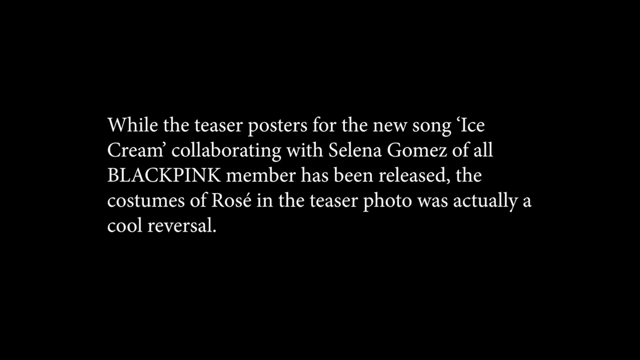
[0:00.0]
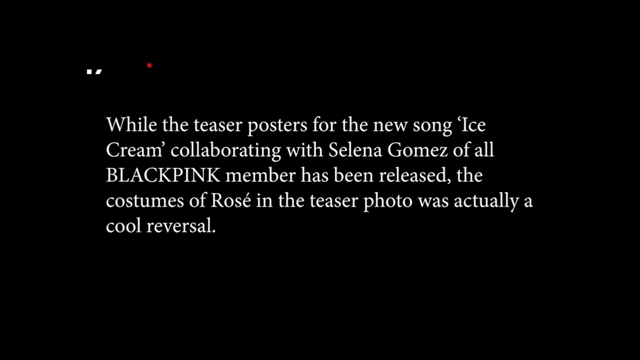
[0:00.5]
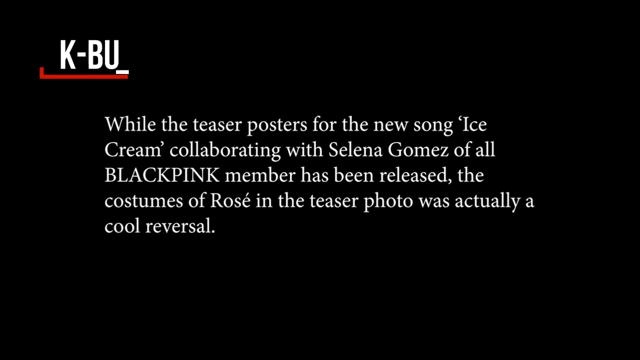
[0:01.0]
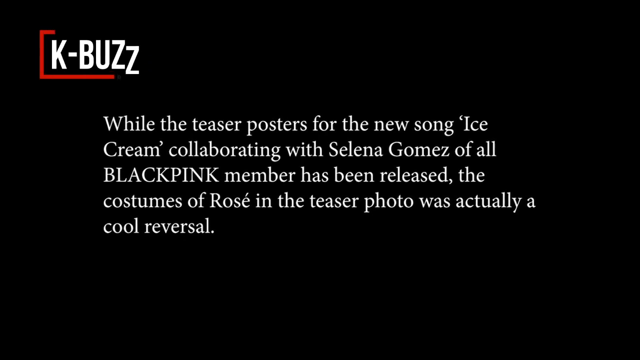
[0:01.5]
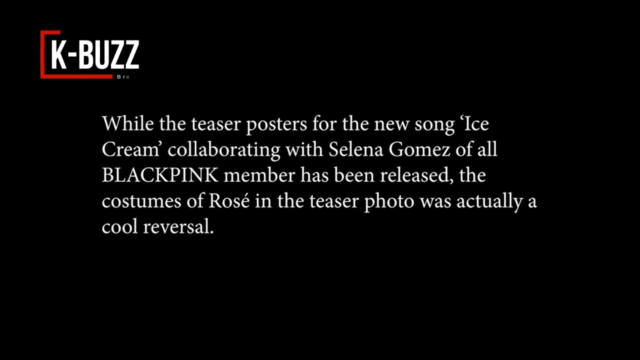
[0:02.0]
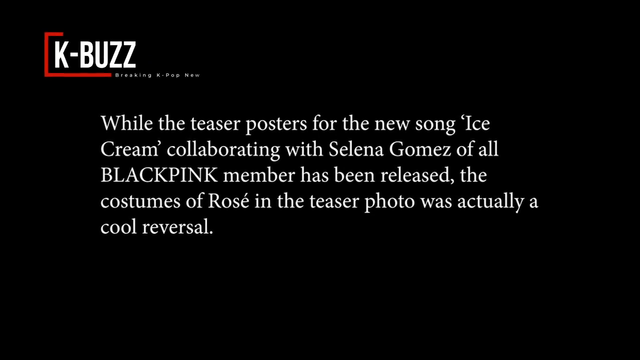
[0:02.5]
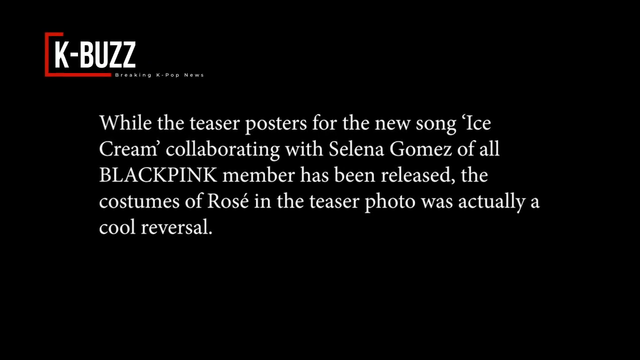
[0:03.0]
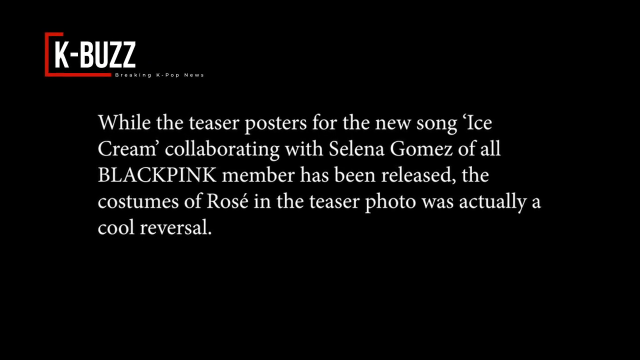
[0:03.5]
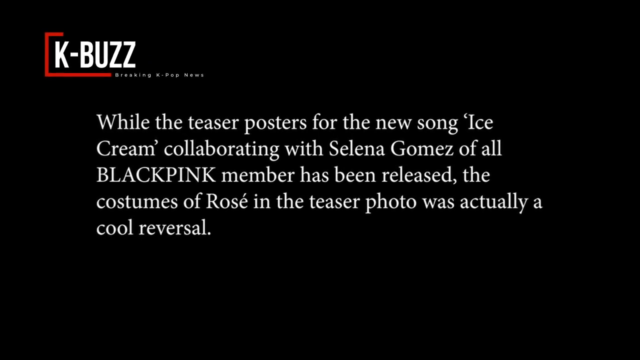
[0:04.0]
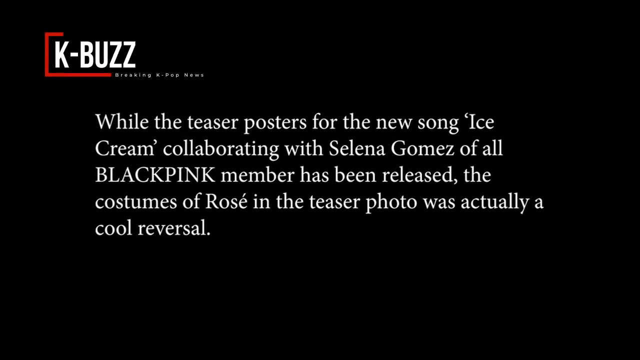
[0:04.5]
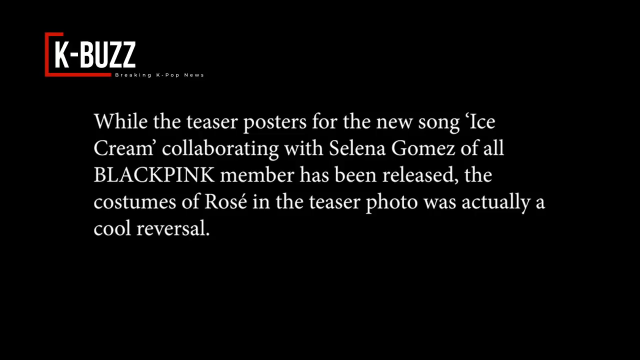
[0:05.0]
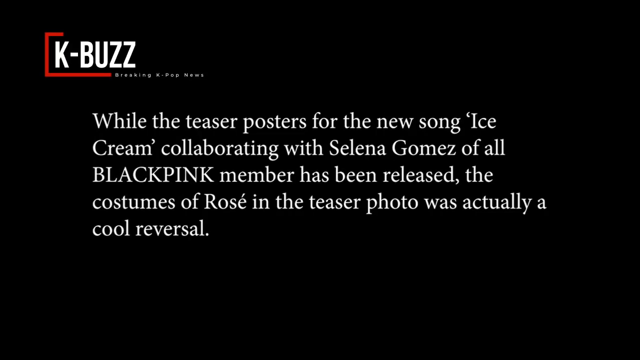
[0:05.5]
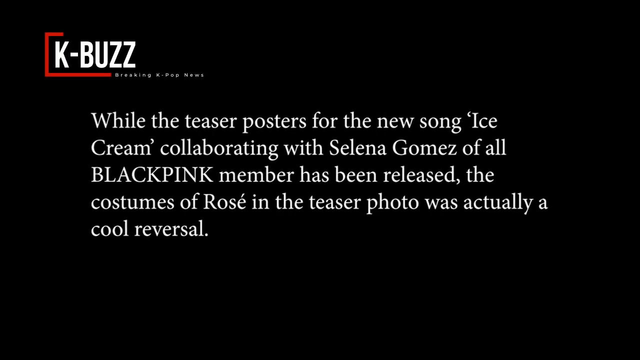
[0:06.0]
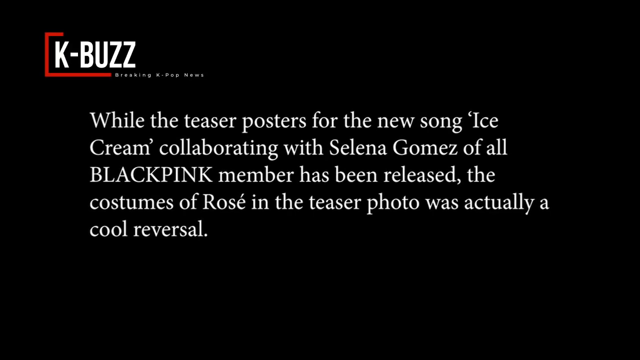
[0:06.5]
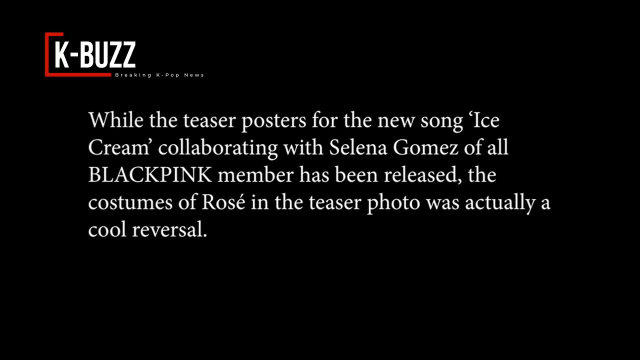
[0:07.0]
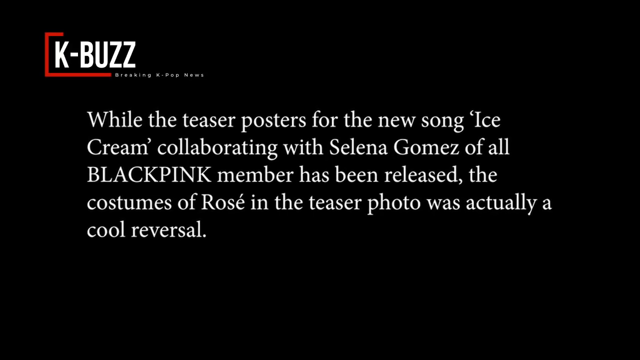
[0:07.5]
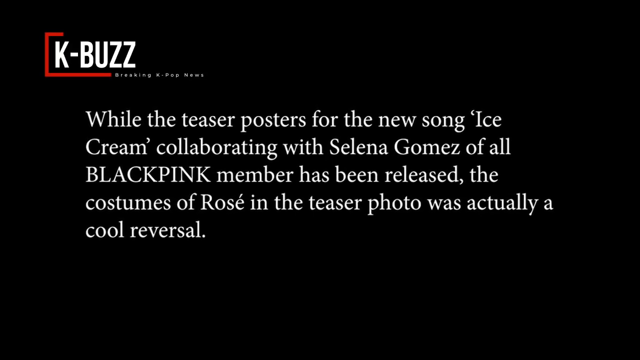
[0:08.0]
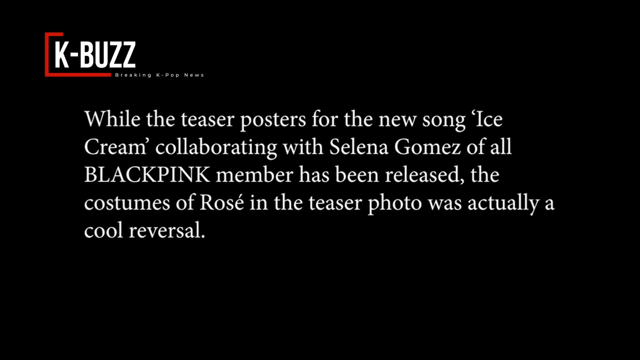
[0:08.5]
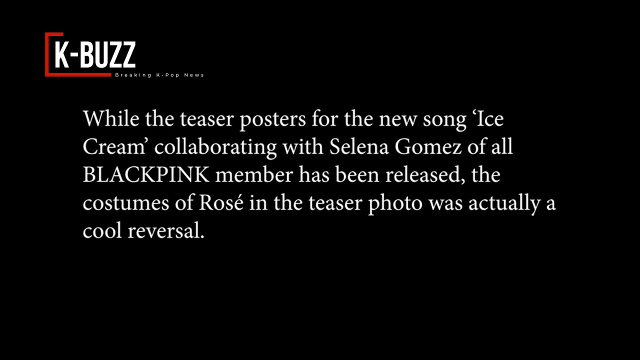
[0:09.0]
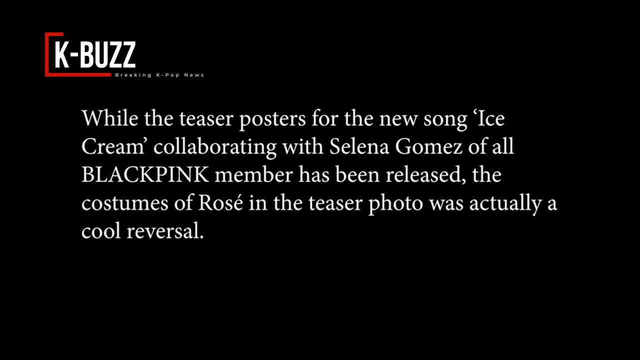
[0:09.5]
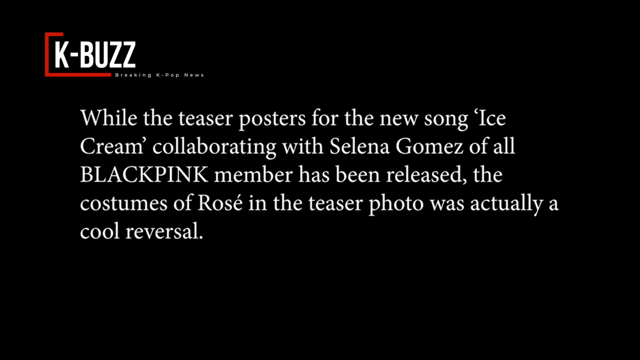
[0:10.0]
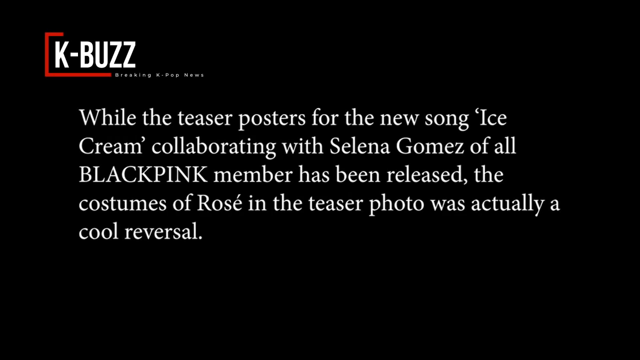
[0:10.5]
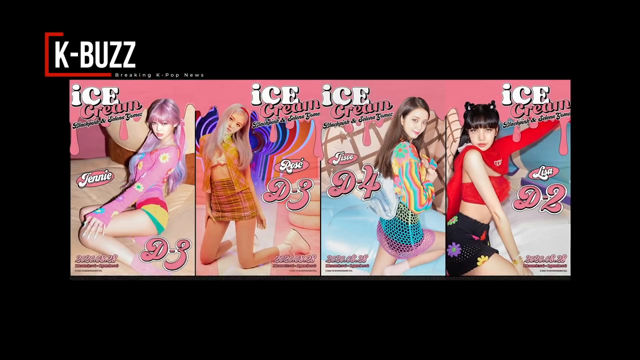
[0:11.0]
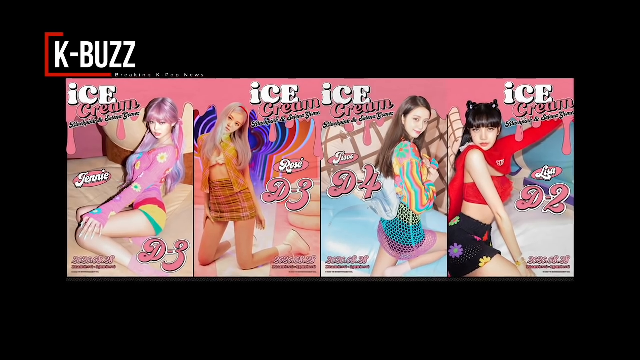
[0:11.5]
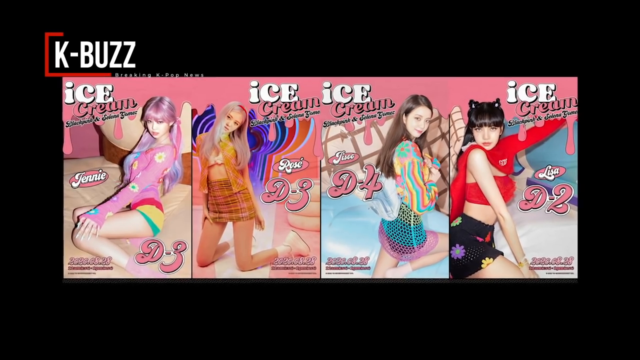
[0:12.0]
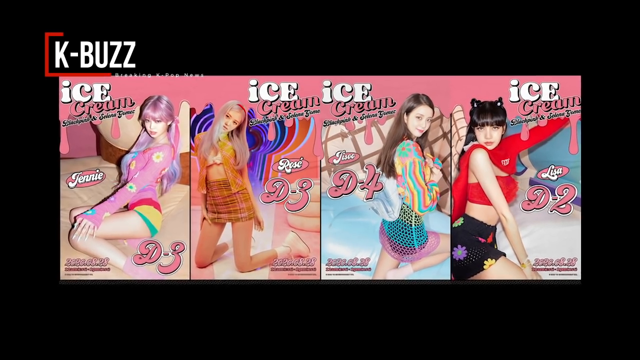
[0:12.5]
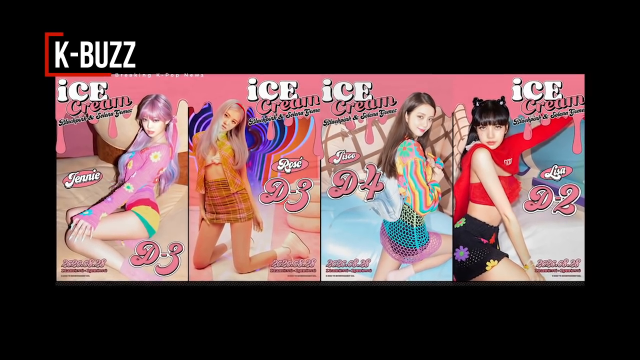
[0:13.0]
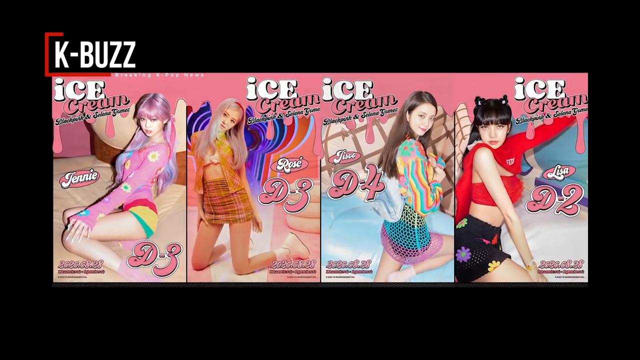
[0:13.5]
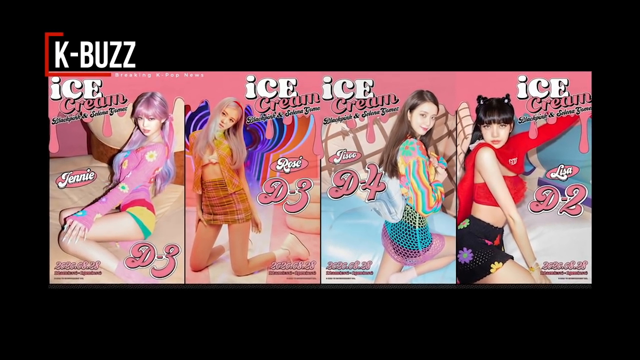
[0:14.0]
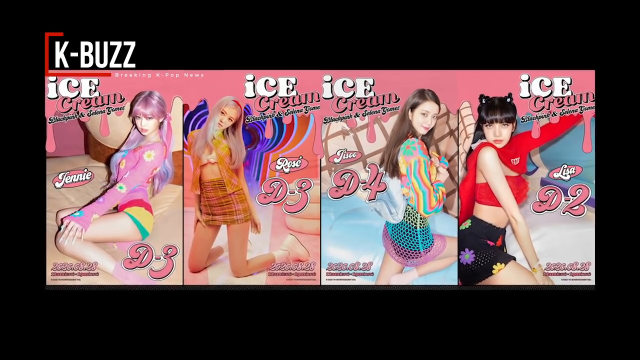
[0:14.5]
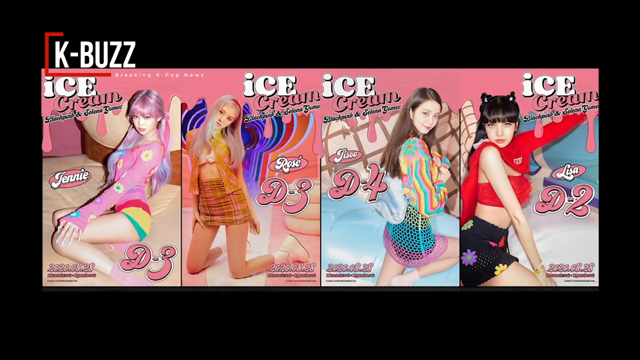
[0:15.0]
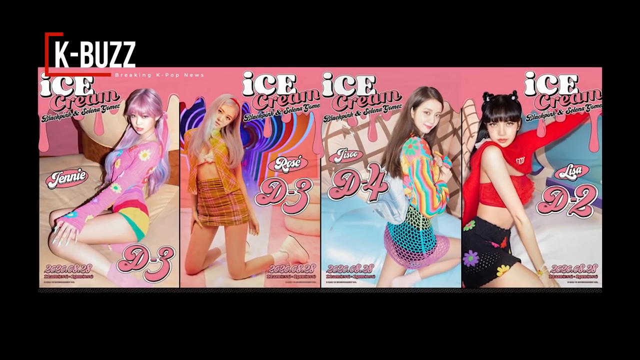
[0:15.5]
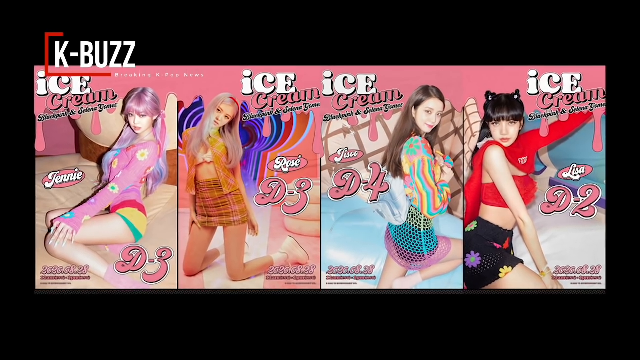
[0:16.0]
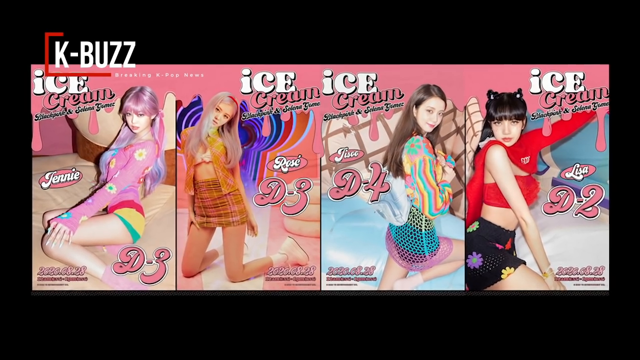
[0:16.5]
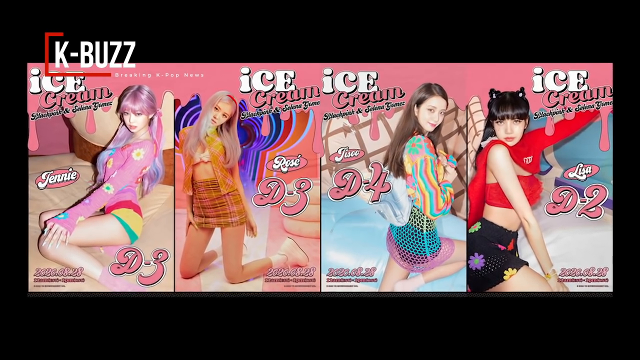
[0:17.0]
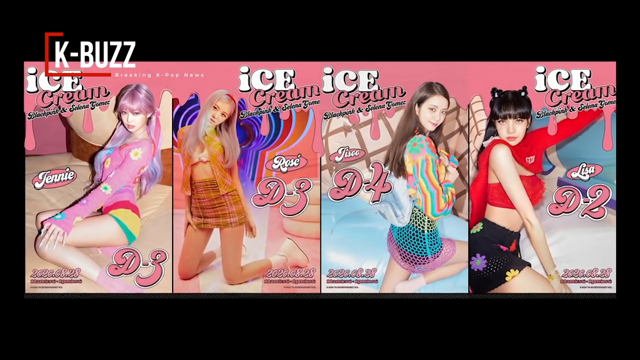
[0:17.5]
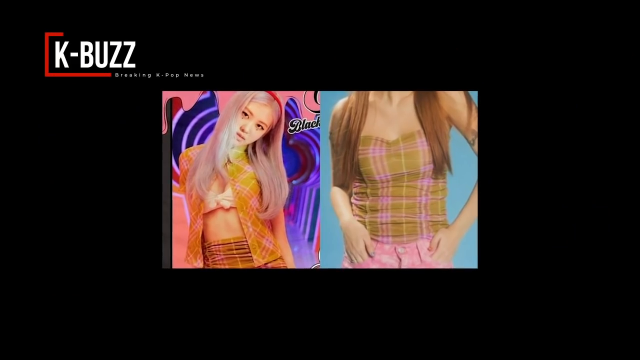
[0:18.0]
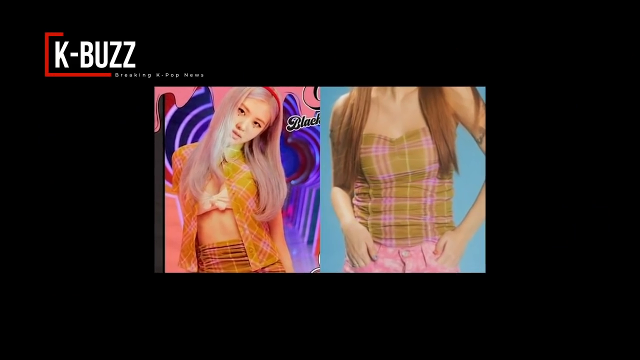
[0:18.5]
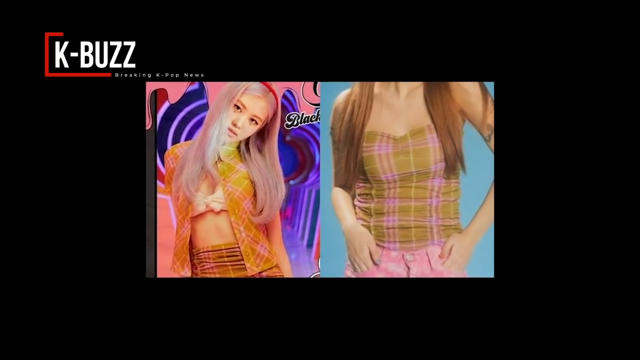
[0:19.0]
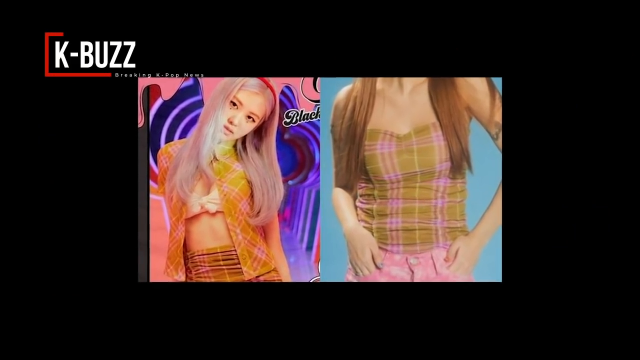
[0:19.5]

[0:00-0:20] In the top left-hand corner, a red line almost surrounds the text "K-Buzz" in white; it looks like part of a rectangle, covering about half of the bottom, the left side and a portion of the top, maybe around 40% of it. In the center is what appears to be the photo shoot from the collaboration. The text "Ice Cream, Blackpink, and Selena Gomez" appears four times. Each photo depicts one member of Blackpink in the collaboration outfit: Jenny on the left, Rosé to the right, Jisoo further right, and Lisa furthest right. Jenny's and Rosé's photos say "D3", Jisoo's says "4", and Lisa's says "D2". The video zooms in, then cuts and zooms in on Rosé's outfit in a left-and-right side-by-side view.